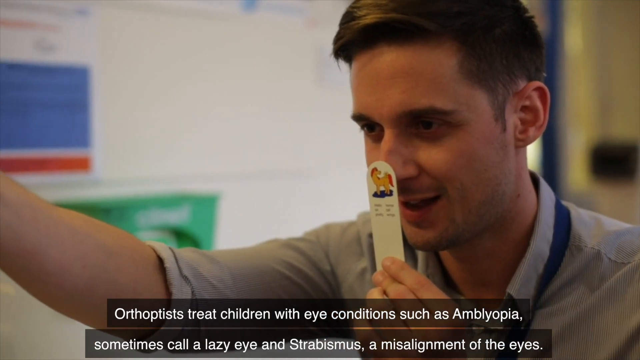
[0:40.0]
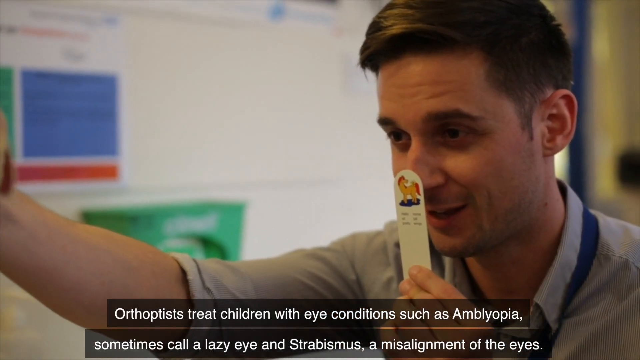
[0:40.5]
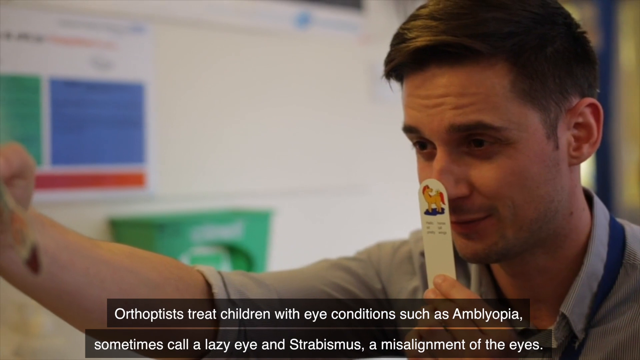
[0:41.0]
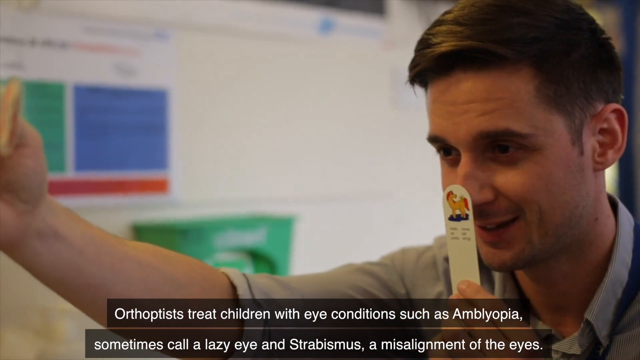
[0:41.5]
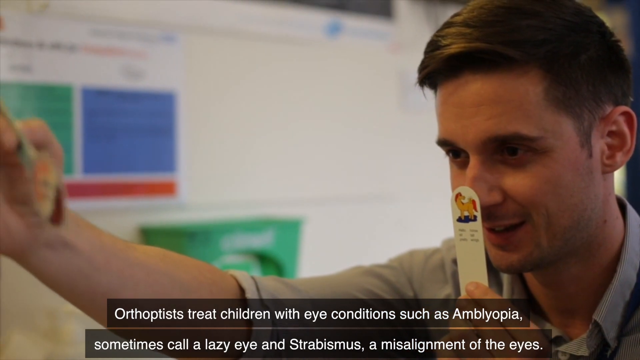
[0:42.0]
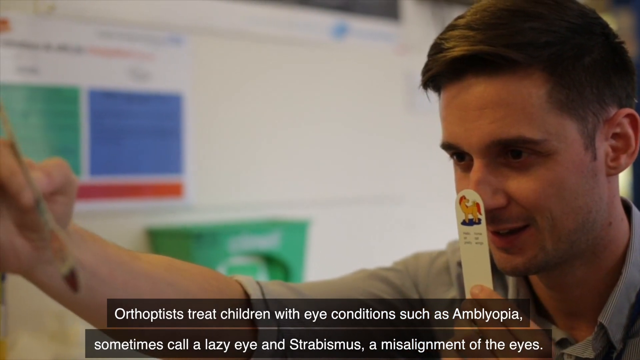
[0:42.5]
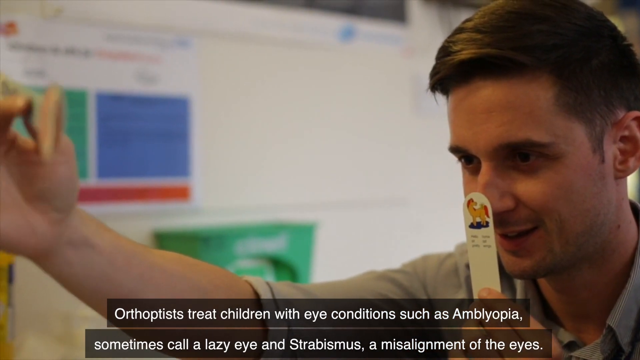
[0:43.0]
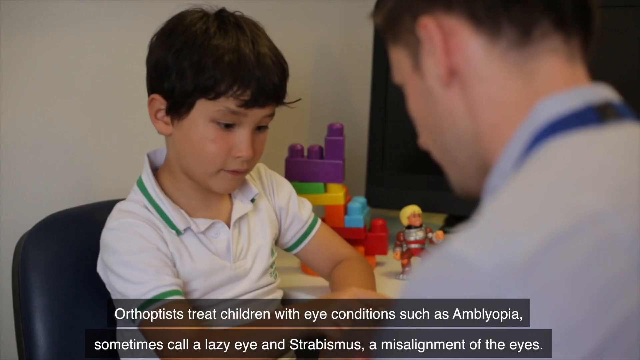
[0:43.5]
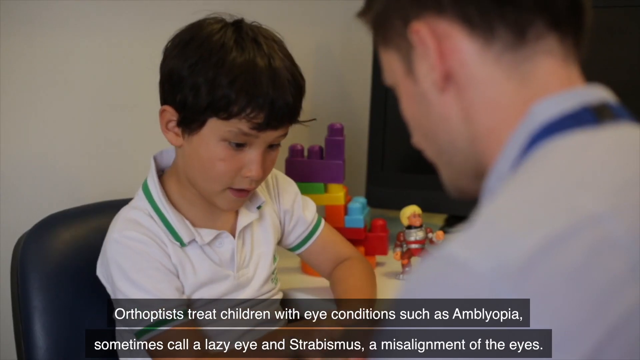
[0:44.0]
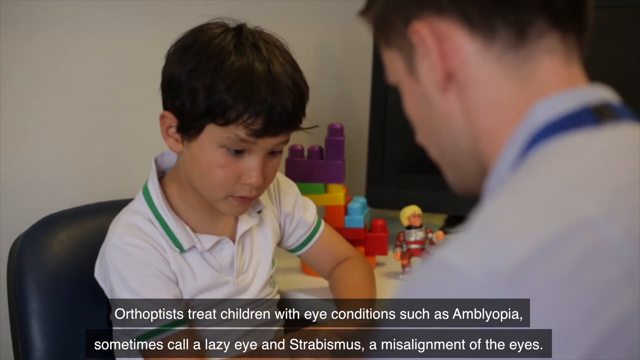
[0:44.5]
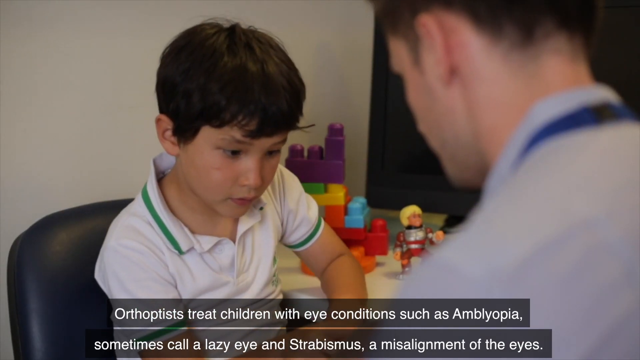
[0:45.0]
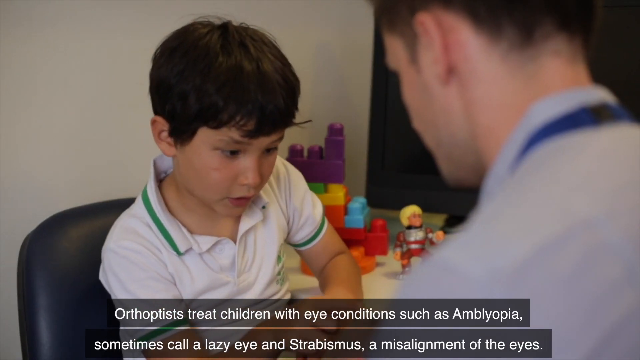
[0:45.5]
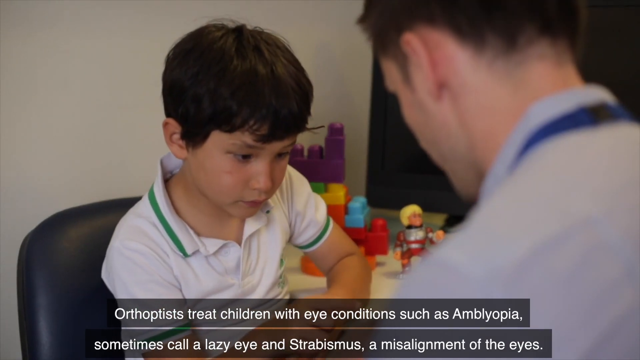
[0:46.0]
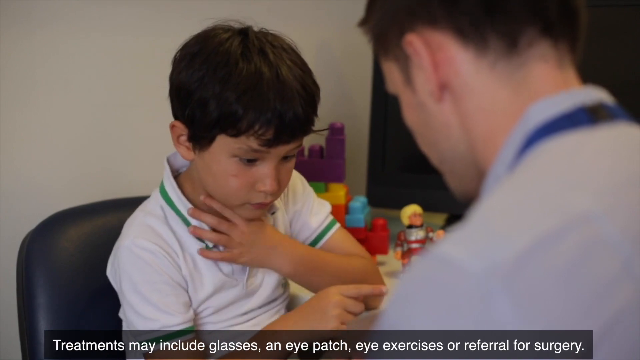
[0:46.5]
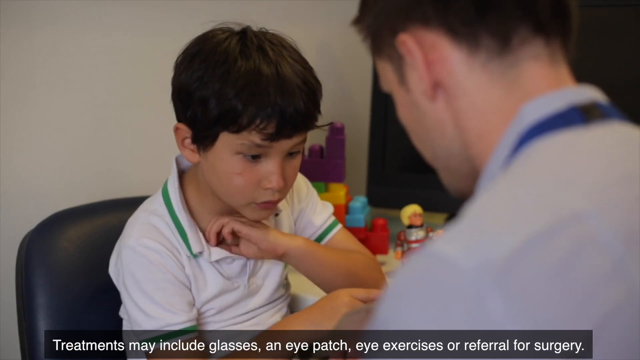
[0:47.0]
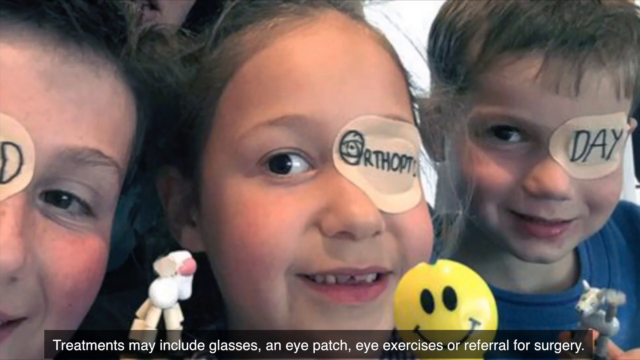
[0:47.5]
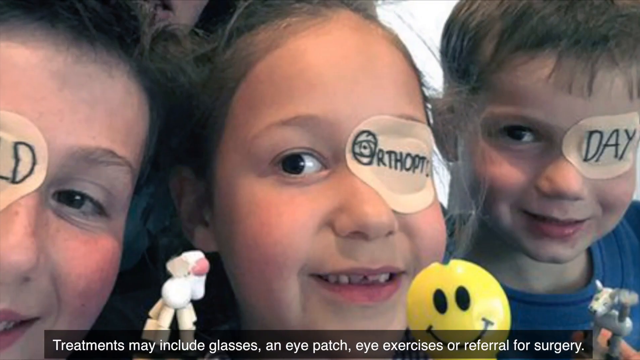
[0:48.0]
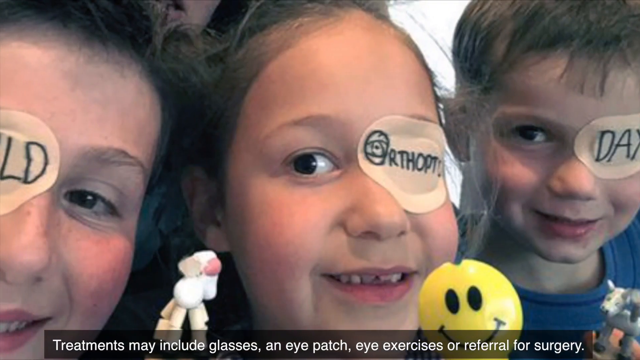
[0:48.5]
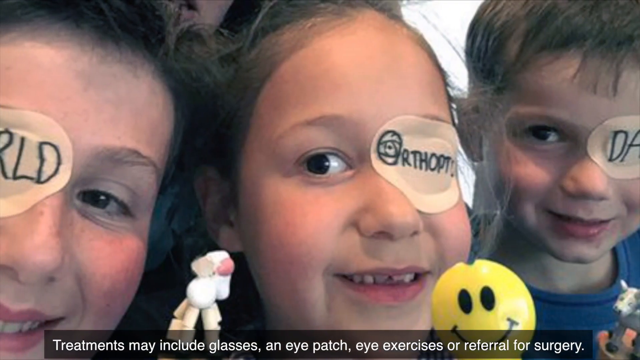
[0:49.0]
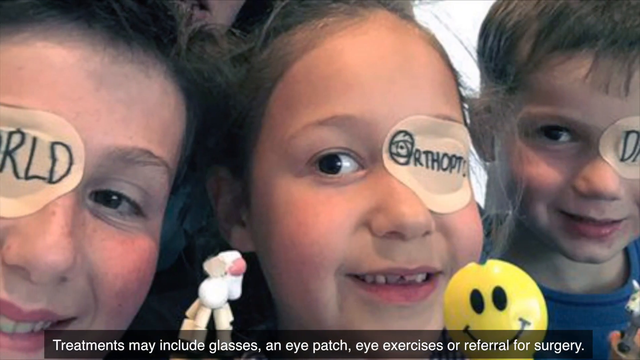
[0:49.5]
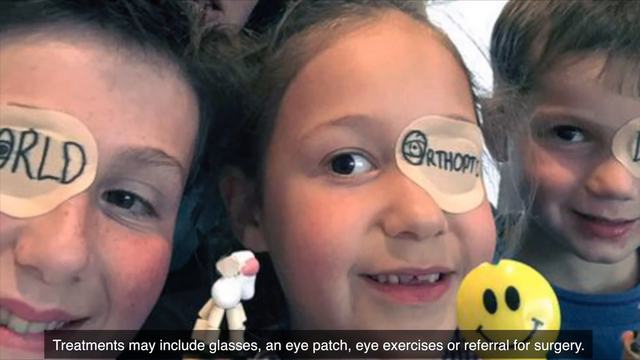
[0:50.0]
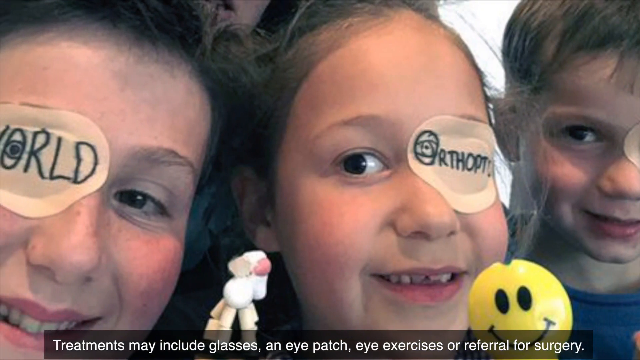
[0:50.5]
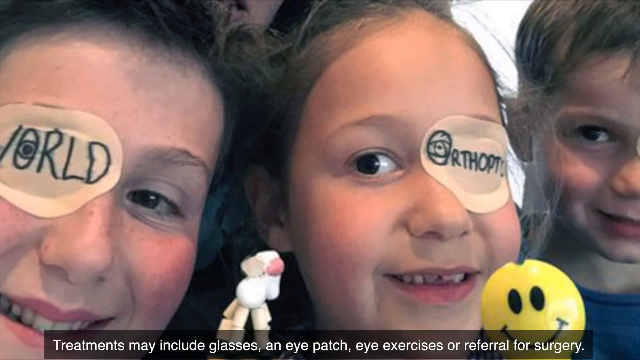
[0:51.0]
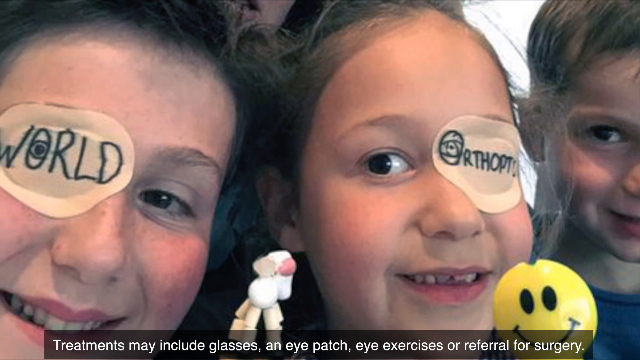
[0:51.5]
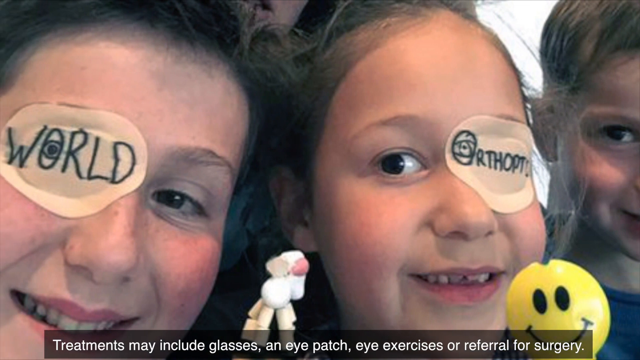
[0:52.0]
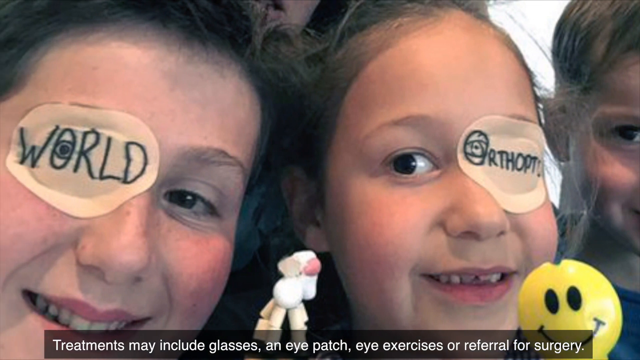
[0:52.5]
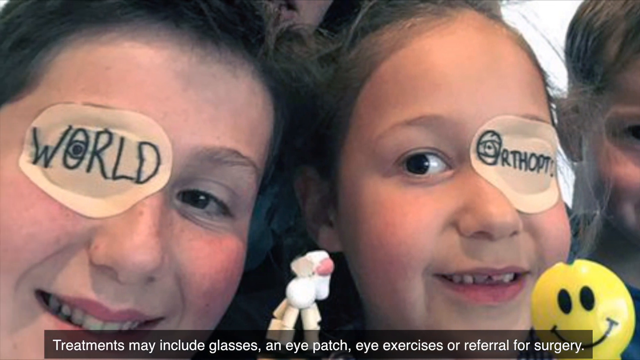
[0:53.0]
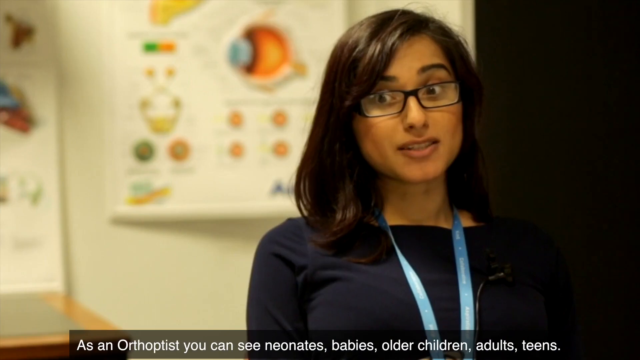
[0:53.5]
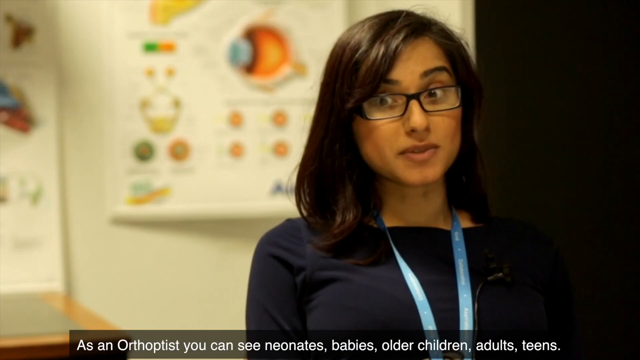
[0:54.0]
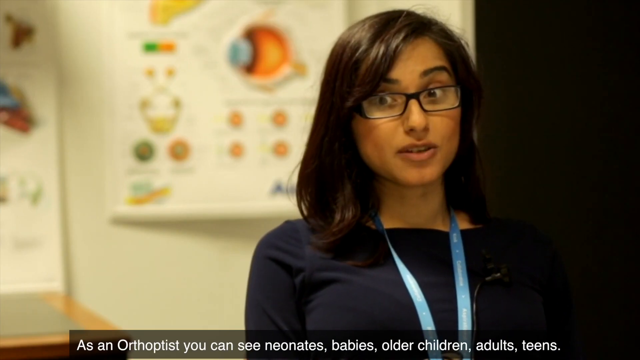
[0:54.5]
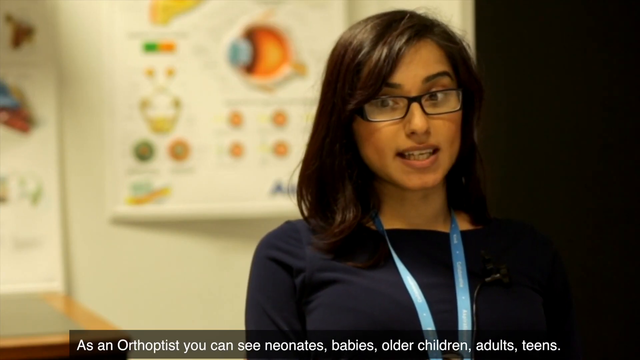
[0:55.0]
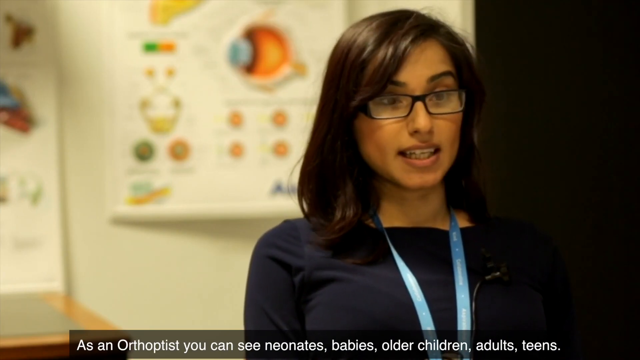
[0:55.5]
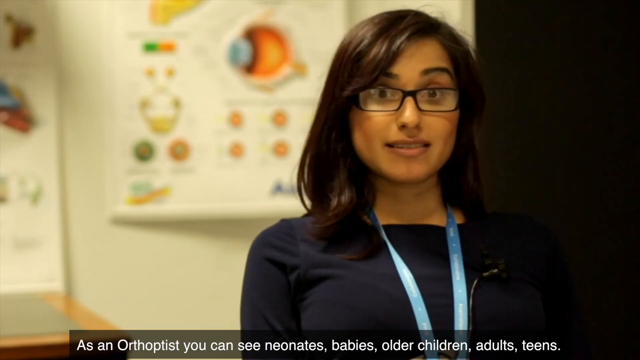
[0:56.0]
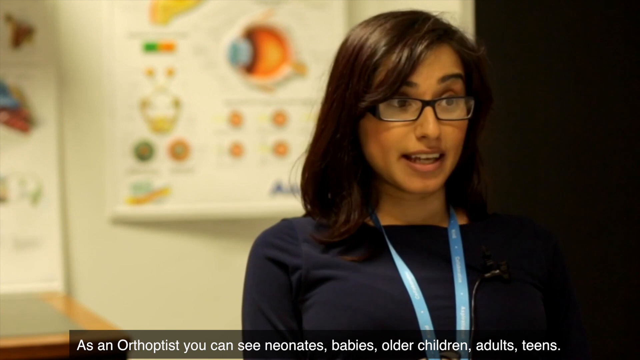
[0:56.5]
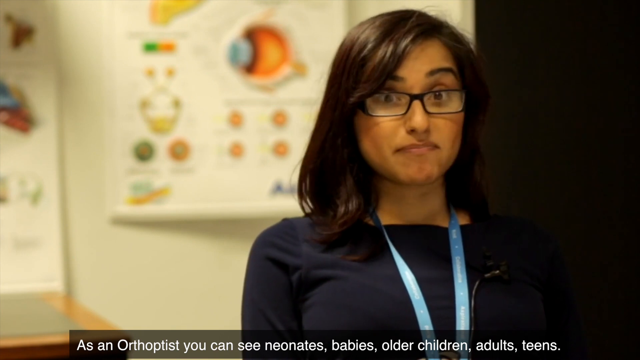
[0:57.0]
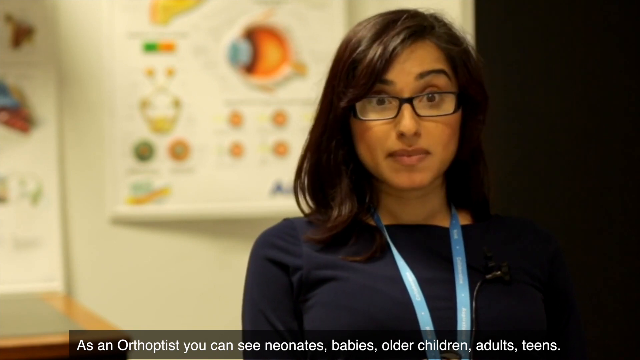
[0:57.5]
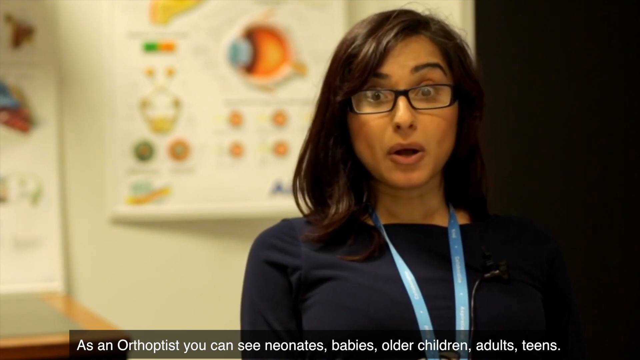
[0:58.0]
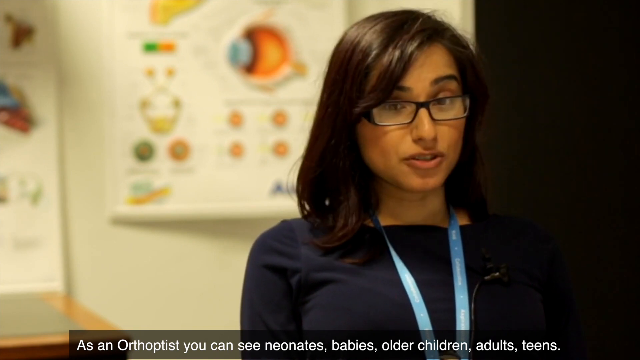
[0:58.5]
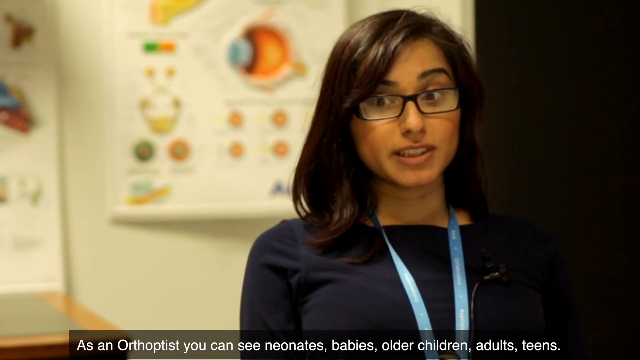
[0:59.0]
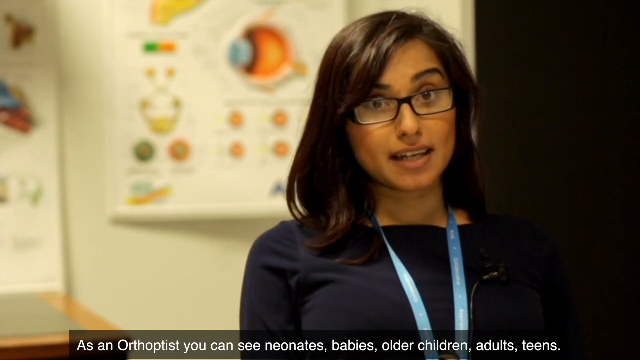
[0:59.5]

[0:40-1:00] The doctor is down on his knees talking to the little boy, with his instruments. The camera pans to a picture of three children. On the left is a little girl with dark hair and a patch over her right eye that says "world". In the middle is a little girl with long dark hair and small white bows in it, missing a couple of front teeth, with dark eyes, smiling, and wearing a small patch over her eye that says "orthoptics". On the right is a mischievous-looking little boy with short dark hair, big brown eyes and a mischievous grin; his patch says "day". The children are celebrating world orthoptics day with their doctor, and a little girl holds a small smiley face on a stick. The camera then pans to a woman, apparently also a physician, with very dark long hair and black glasses, apparently in her mid-30s. She has a blue ribbon around her neck with white words on it. An eye chart is on the wall behind her head, and there is a dark door.